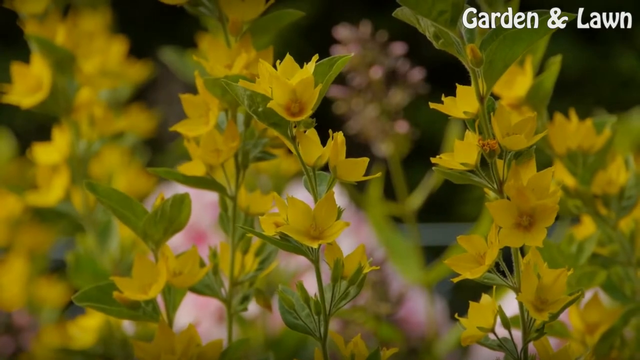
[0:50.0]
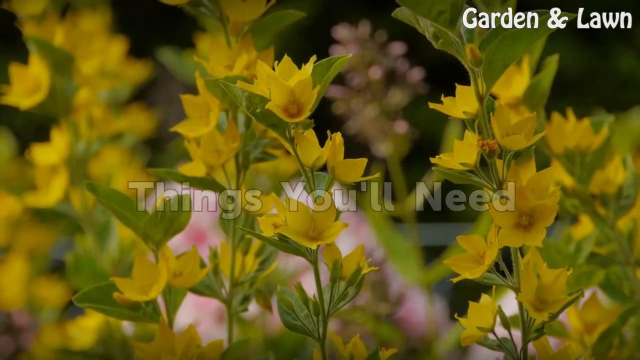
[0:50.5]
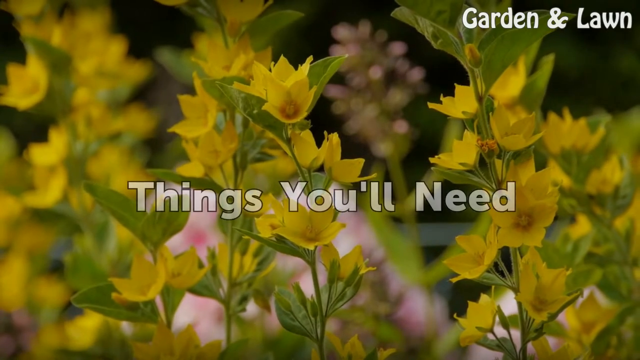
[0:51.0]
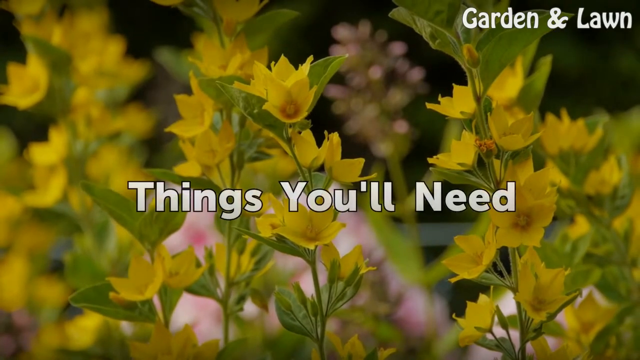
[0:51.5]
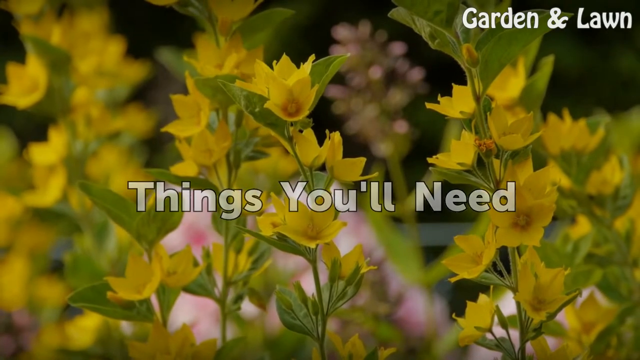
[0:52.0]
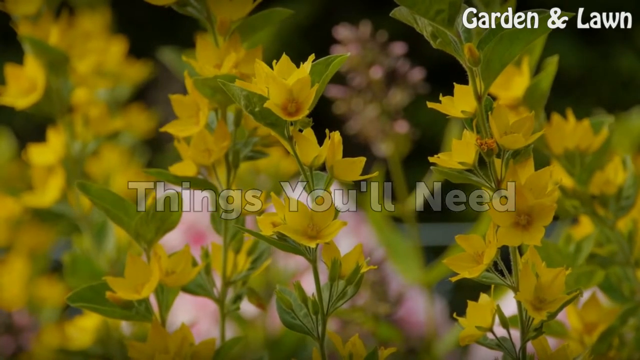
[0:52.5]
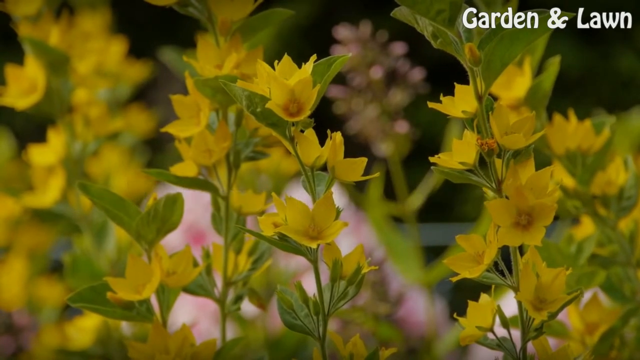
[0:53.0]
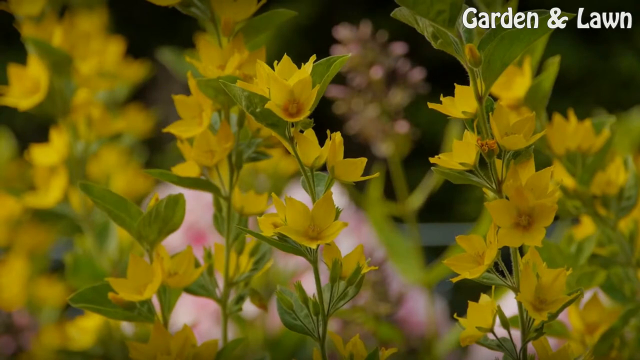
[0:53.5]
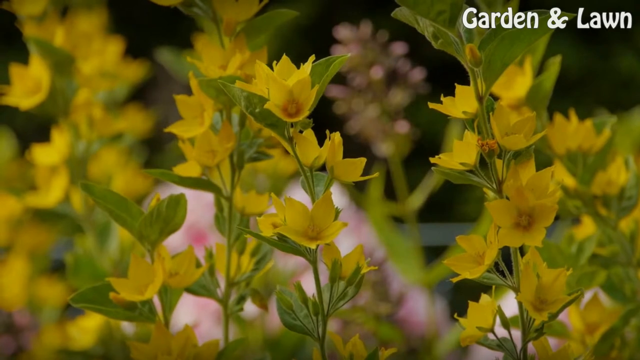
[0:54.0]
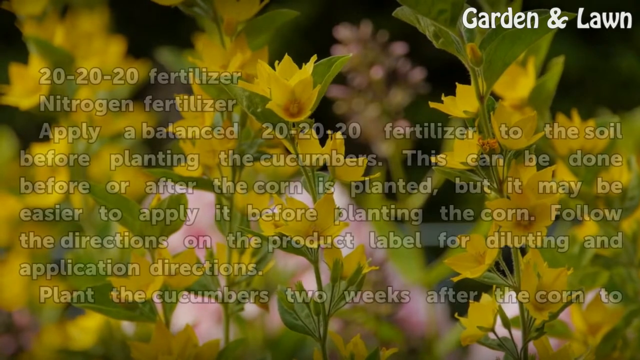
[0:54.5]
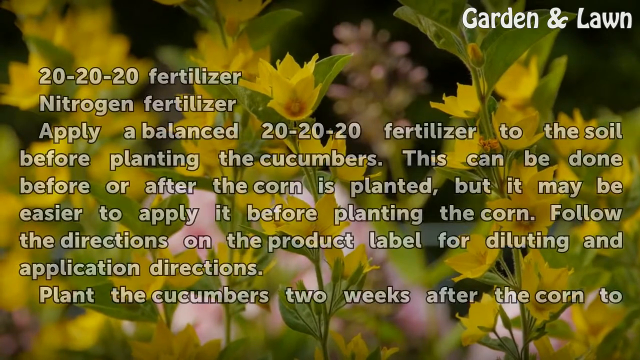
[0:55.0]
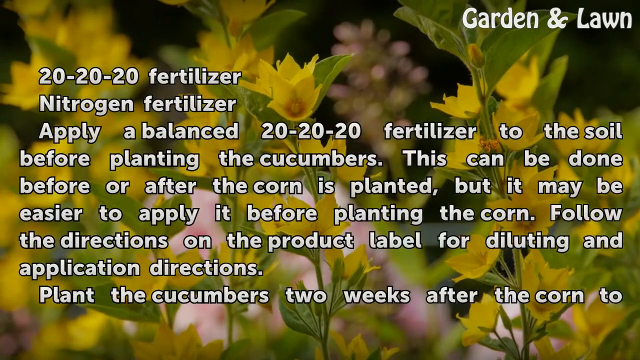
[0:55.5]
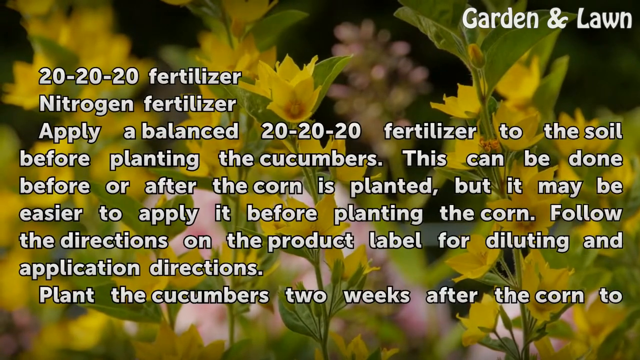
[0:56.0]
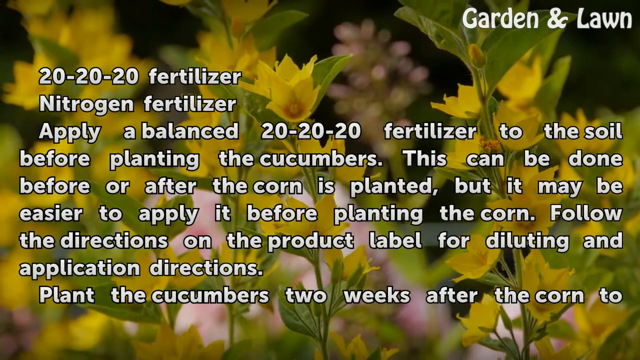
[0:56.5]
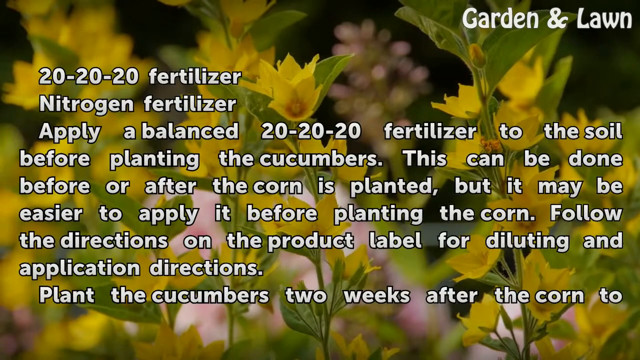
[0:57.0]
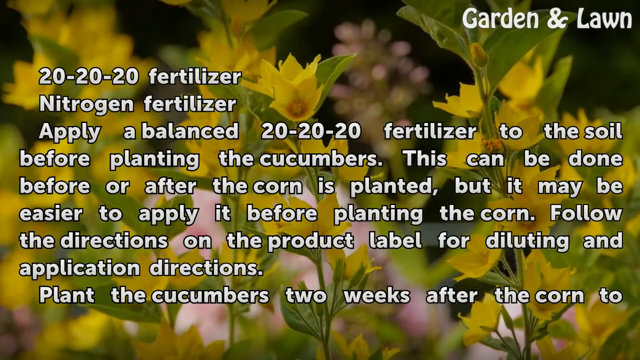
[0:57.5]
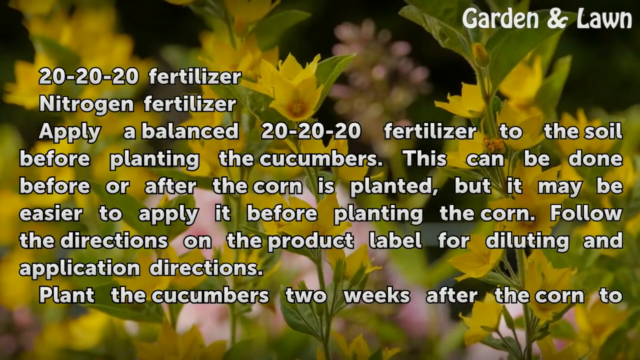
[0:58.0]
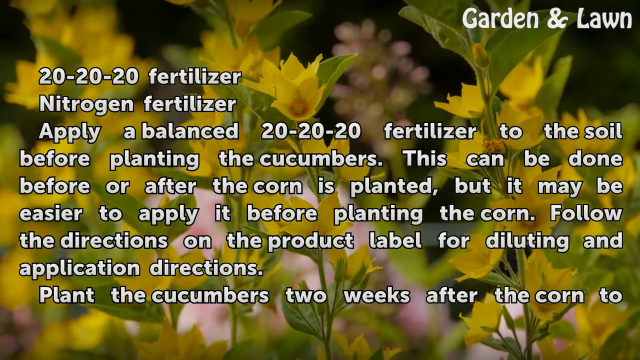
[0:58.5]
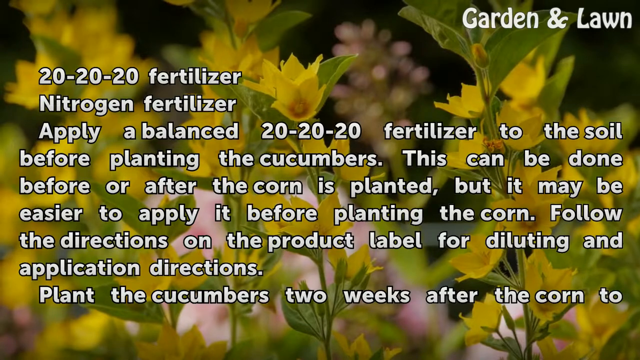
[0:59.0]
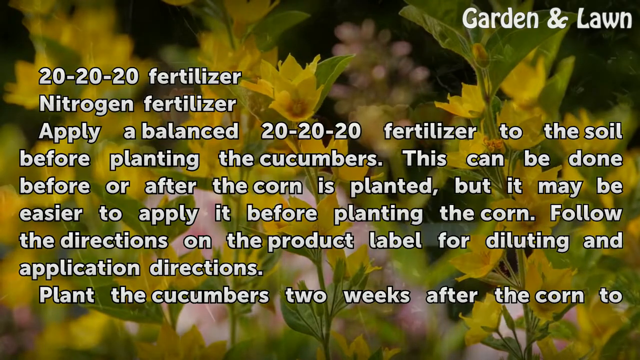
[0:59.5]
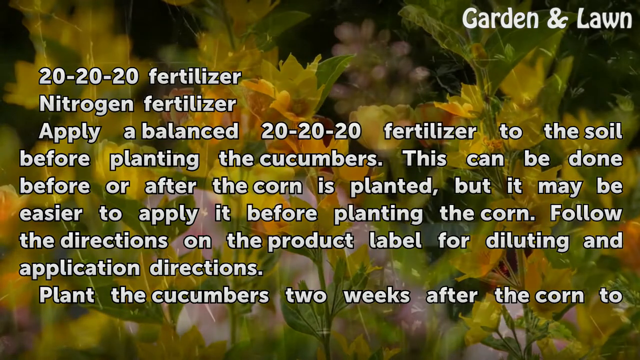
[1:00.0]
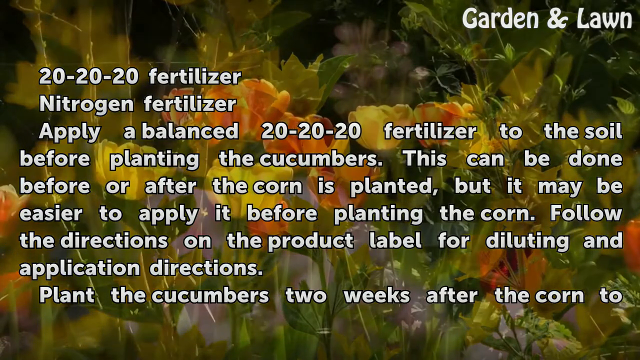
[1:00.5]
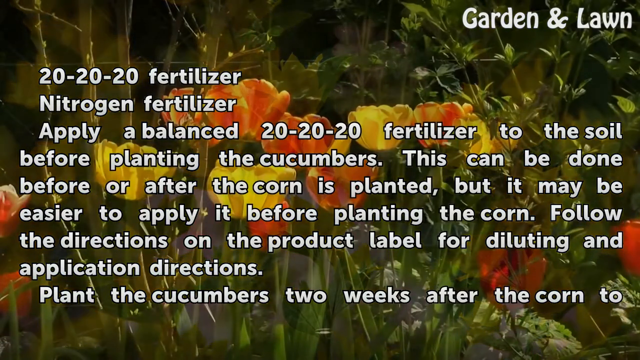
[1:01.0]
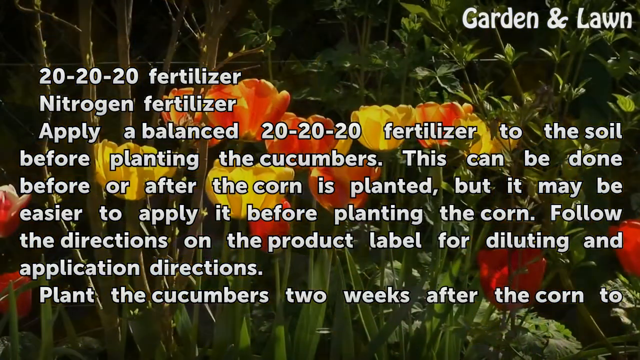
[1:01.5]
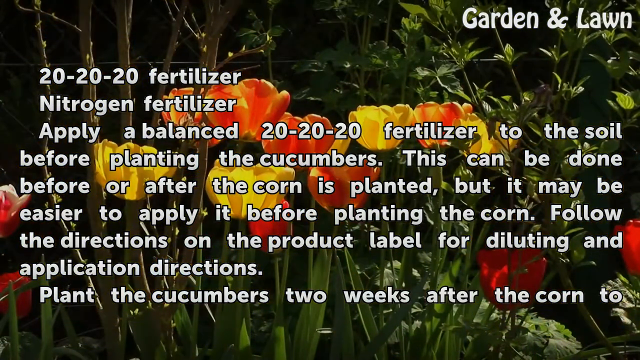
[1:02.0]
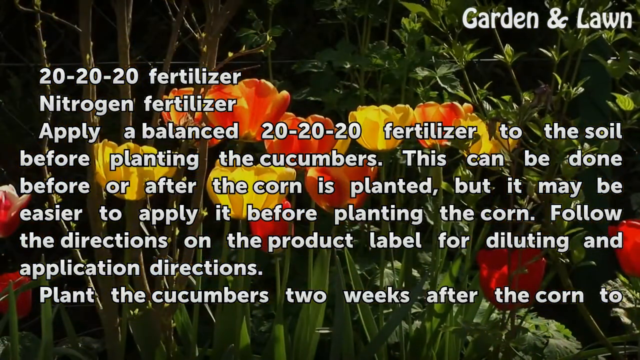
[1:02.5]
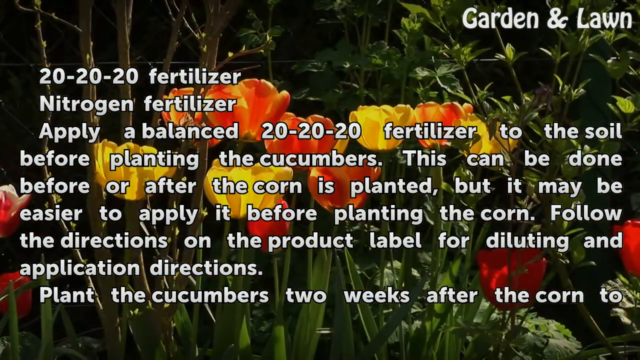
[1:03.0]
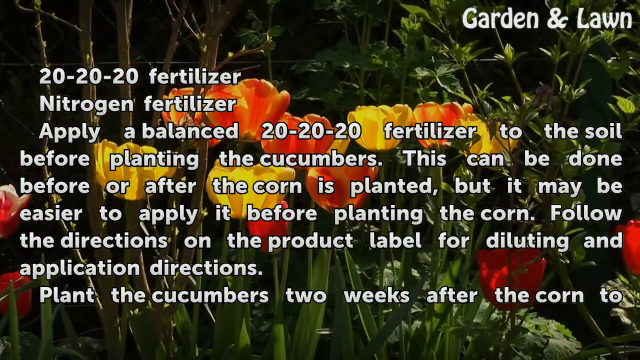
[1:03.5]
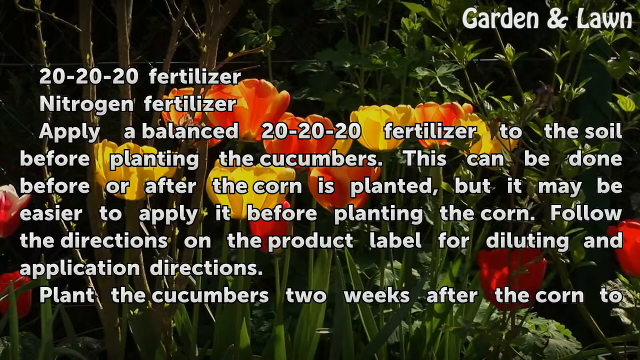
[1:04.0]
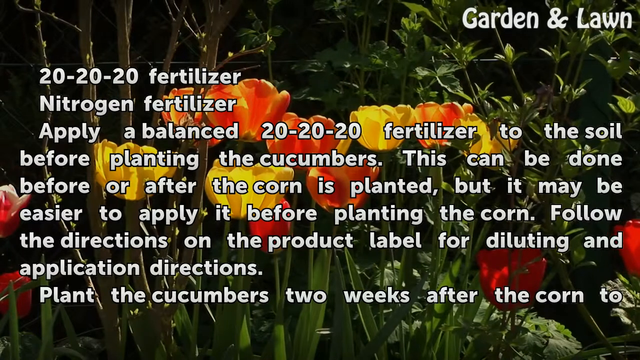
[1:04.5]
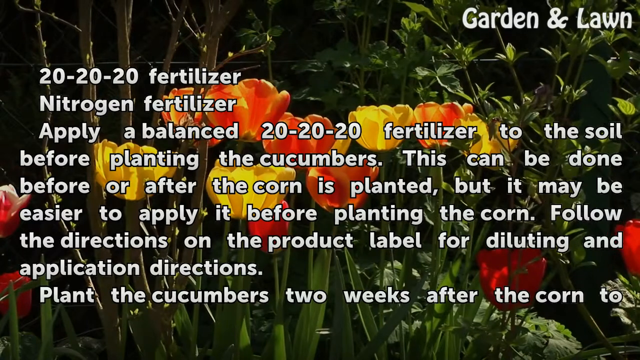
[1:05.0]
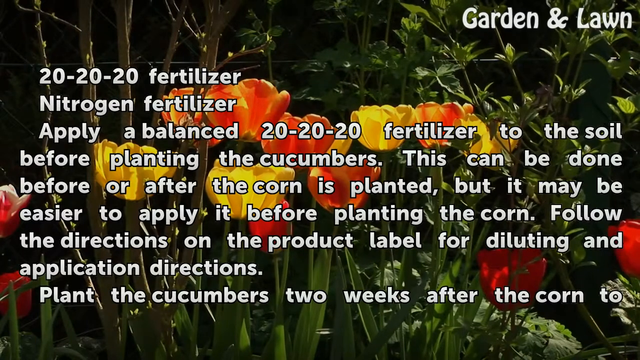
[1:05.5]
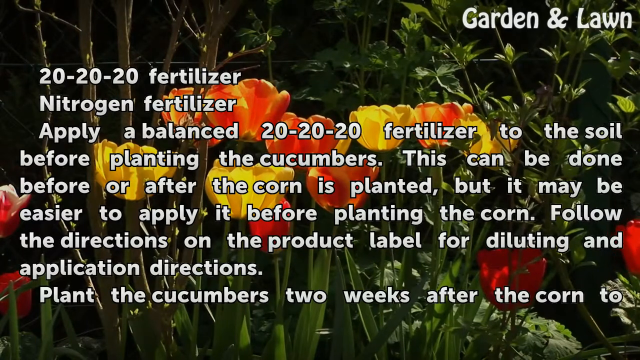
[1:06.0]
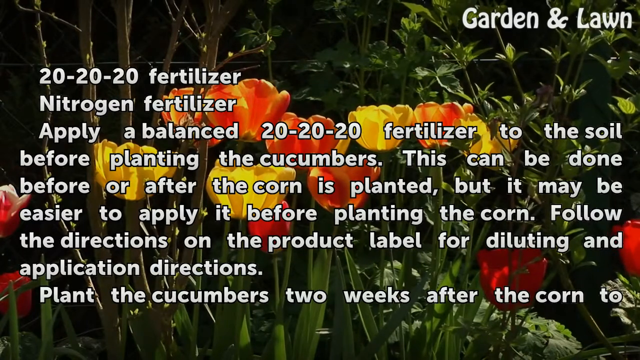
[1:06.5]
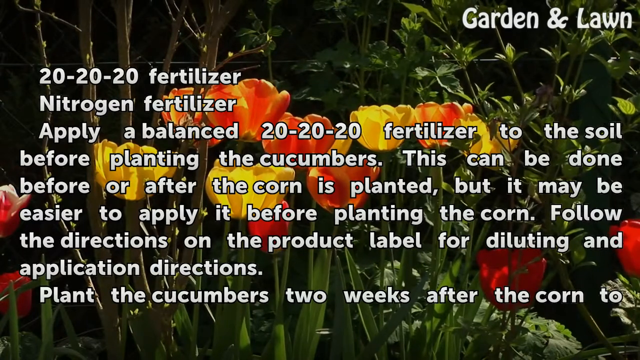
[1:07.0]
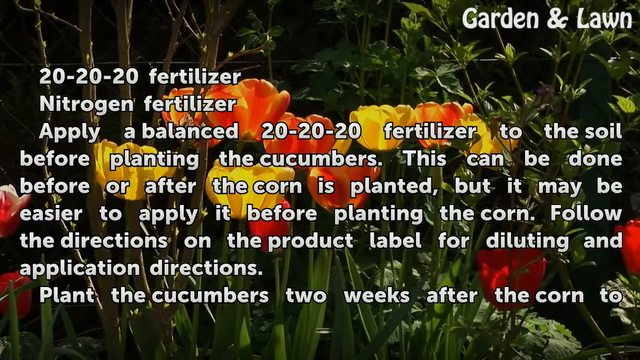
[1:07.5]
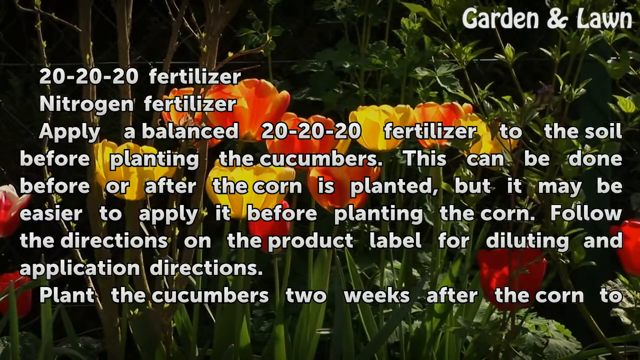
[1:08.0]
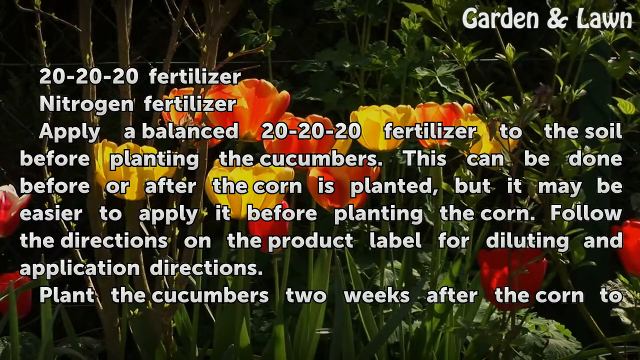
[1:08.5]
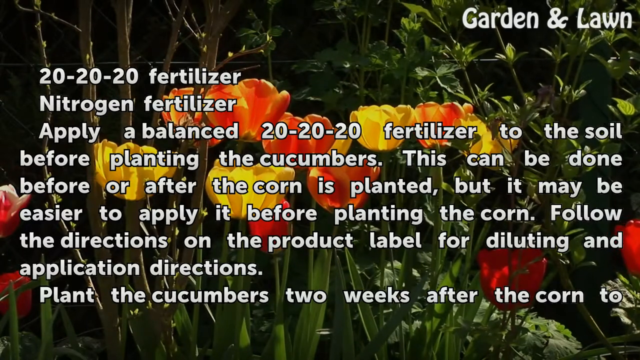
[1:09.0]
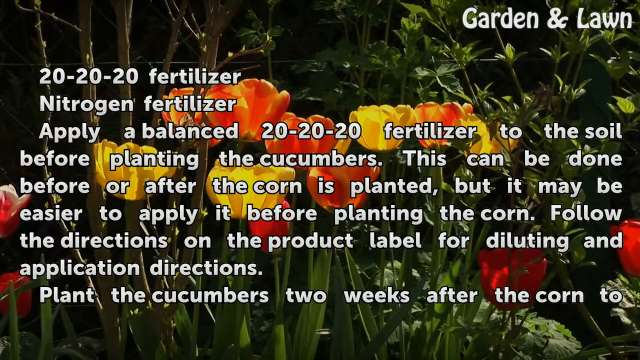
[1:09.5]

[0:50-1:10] A close-up shows yellow dotted loosestrife plants, with the text "garden and lawn" in the upper right-hand corner throughout. The plants sway slightly in the breeze for a moment before the text "Things you'll need", in white with a black outline, fades into the center of the screen. This text quickly fades away and is replaced by another wall of white text with a black outline that reads "20-20-20 fertilizer, nitrogen fertilizer, apply a balanced 20-20-20 fertilizer to the soil before planting the cucumbers. This can be done before or after the corn is planted, but it may be easier to apply it before planting the corn. Follow the directions on the product label for diluting and application directions. Plant the cucumbers two weeks after the corn to"; the rest is cut off. While the text lingers, the scene switches to footage of what looks like a bunch of tulips swaying in the breeze.